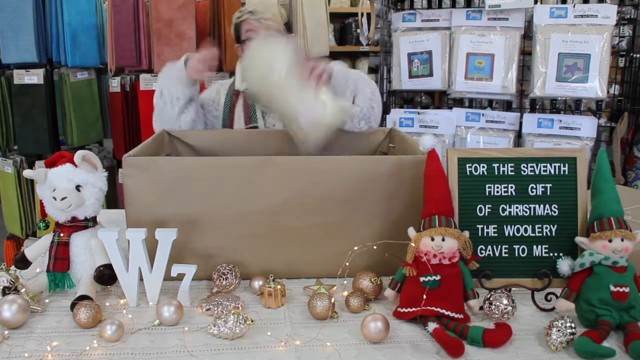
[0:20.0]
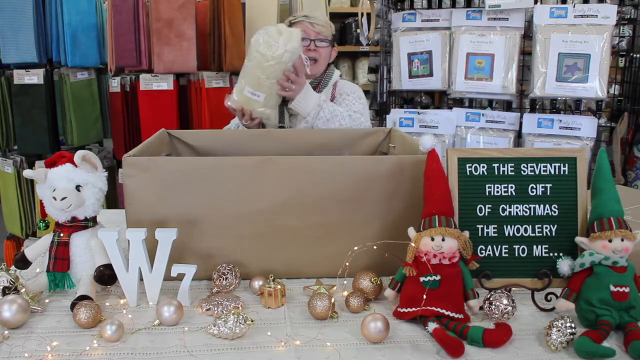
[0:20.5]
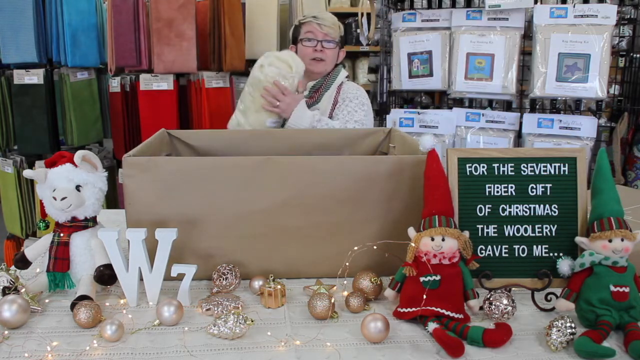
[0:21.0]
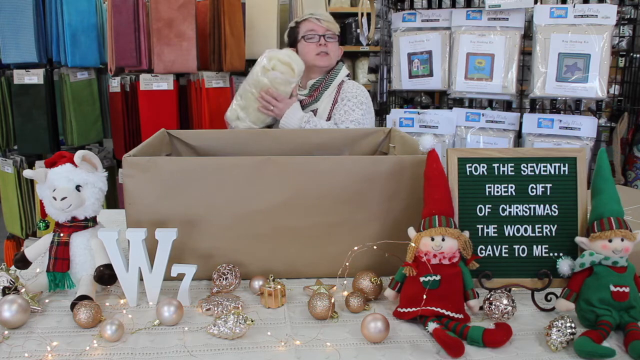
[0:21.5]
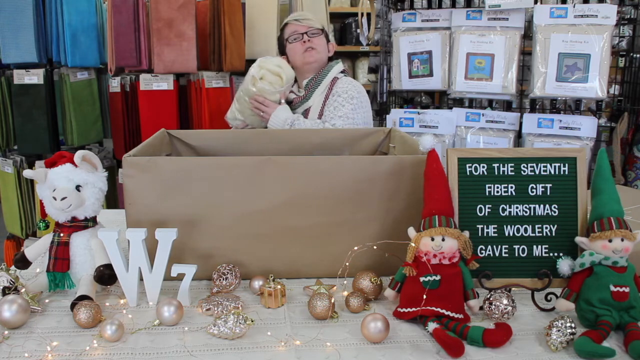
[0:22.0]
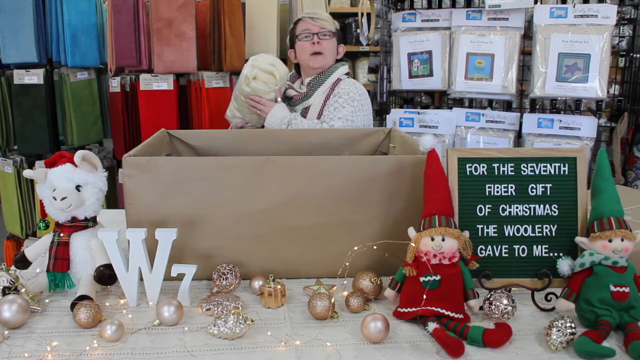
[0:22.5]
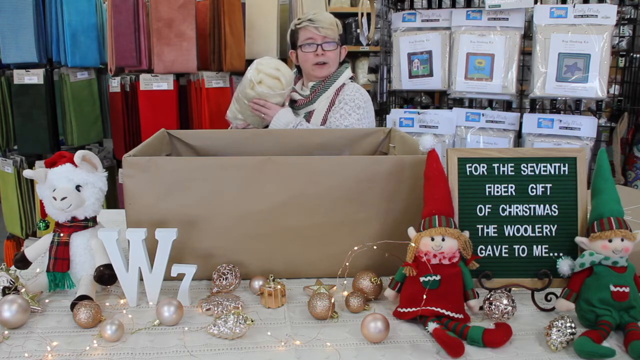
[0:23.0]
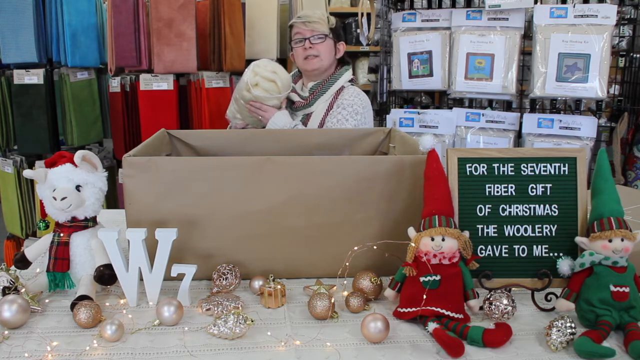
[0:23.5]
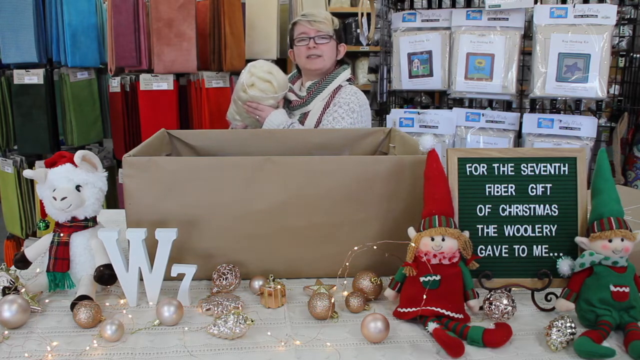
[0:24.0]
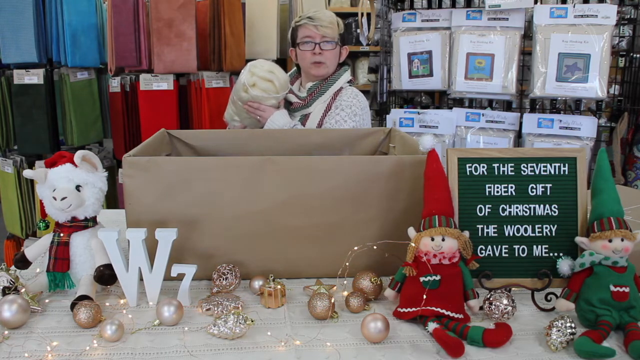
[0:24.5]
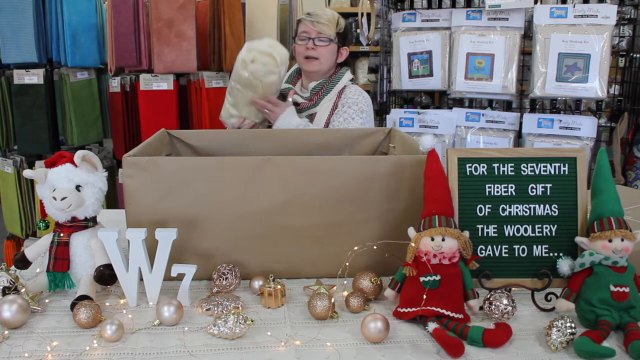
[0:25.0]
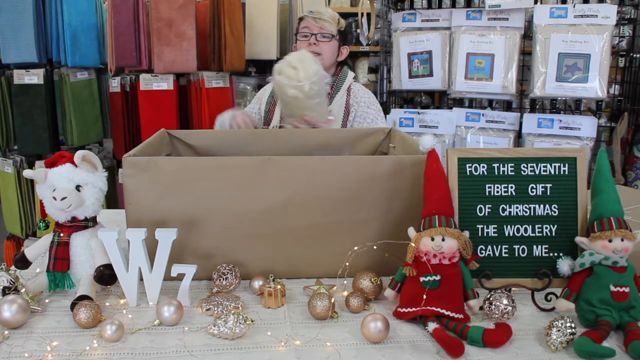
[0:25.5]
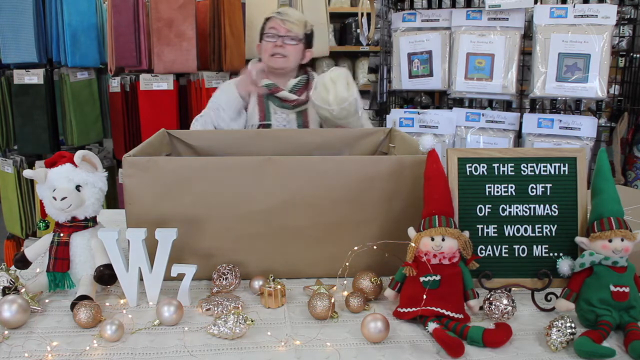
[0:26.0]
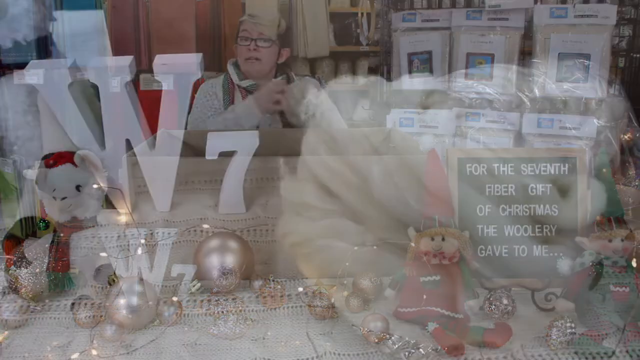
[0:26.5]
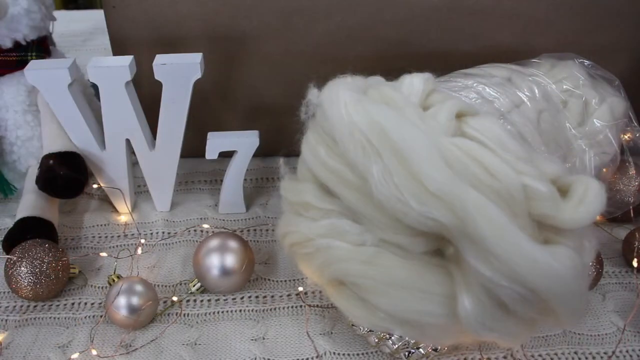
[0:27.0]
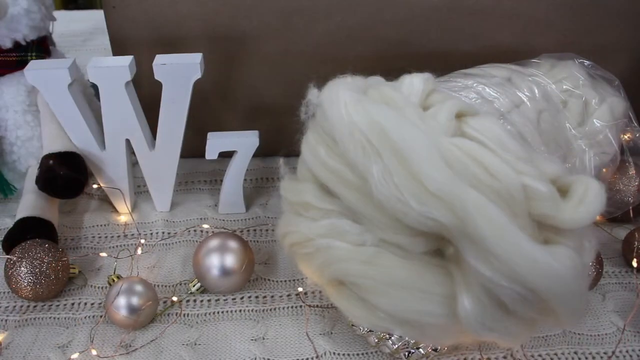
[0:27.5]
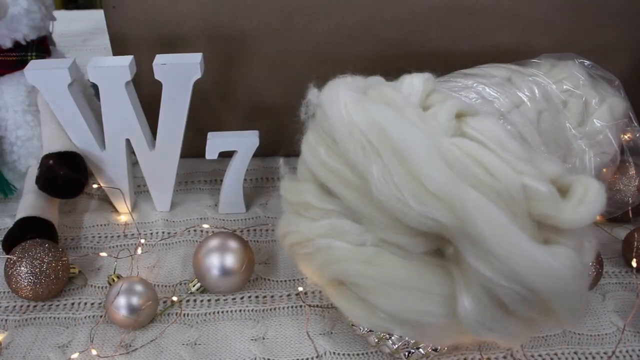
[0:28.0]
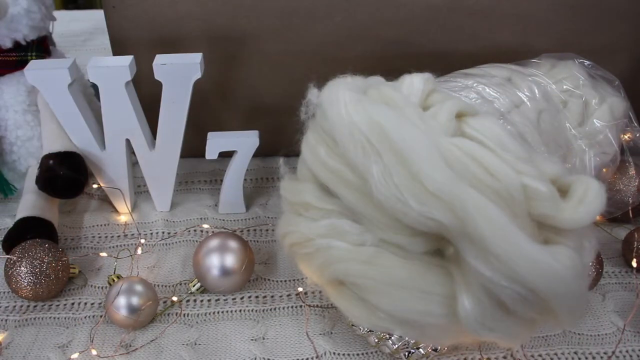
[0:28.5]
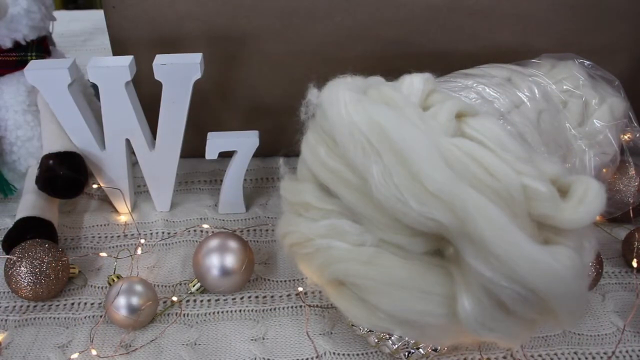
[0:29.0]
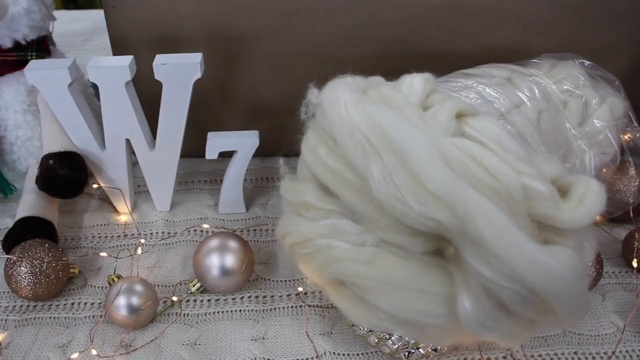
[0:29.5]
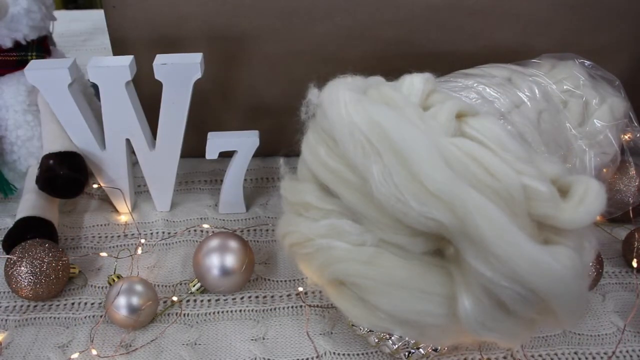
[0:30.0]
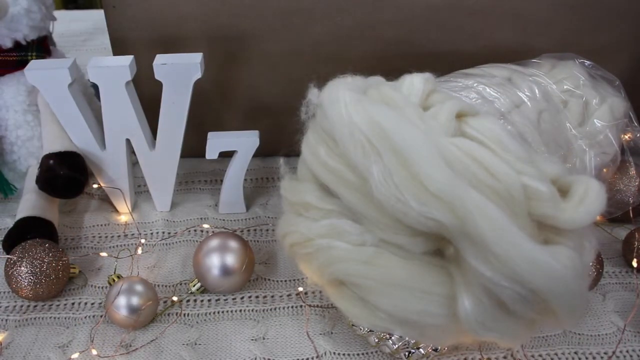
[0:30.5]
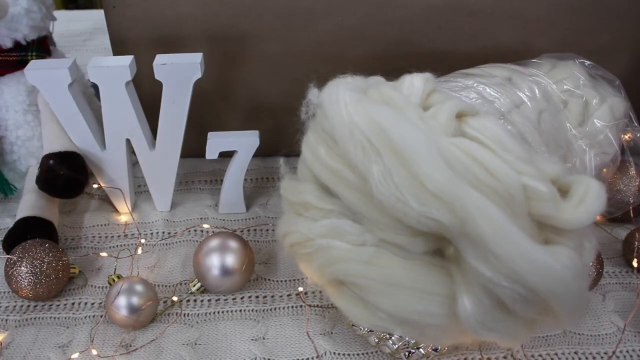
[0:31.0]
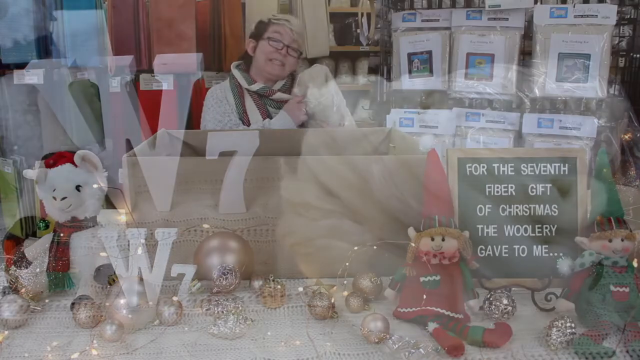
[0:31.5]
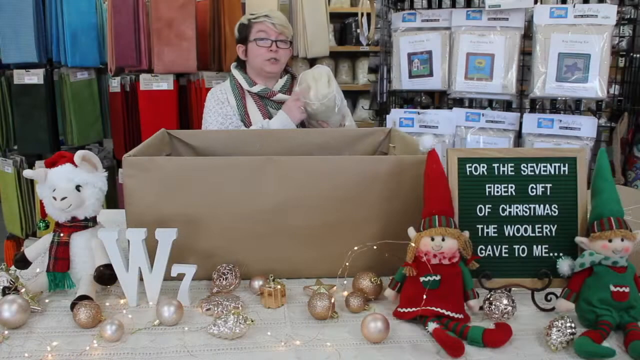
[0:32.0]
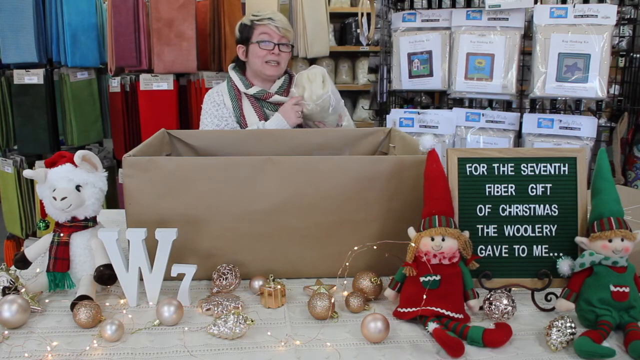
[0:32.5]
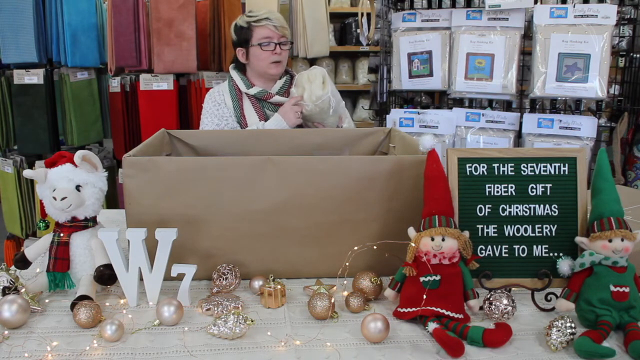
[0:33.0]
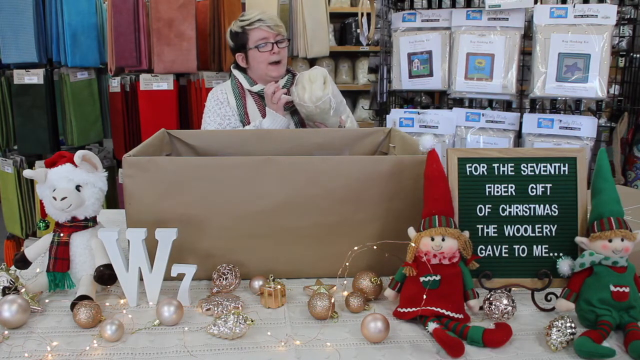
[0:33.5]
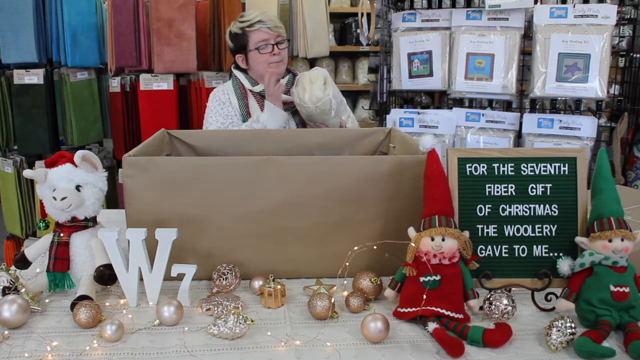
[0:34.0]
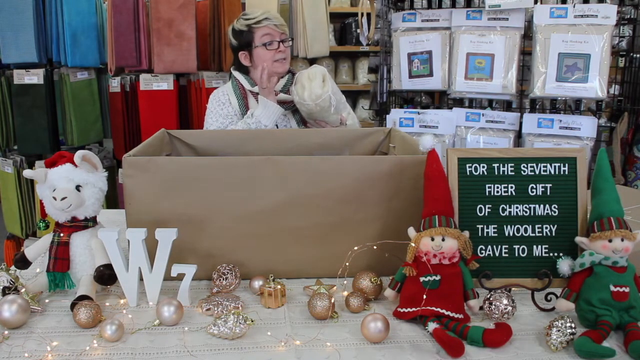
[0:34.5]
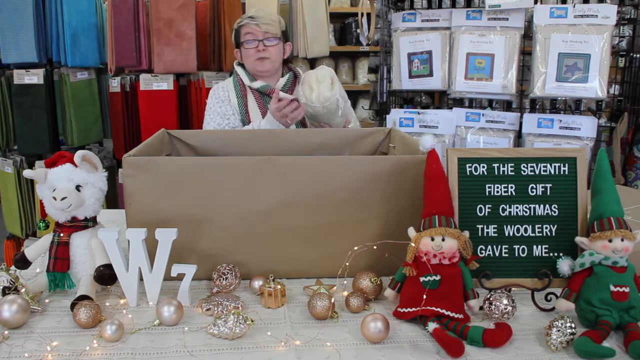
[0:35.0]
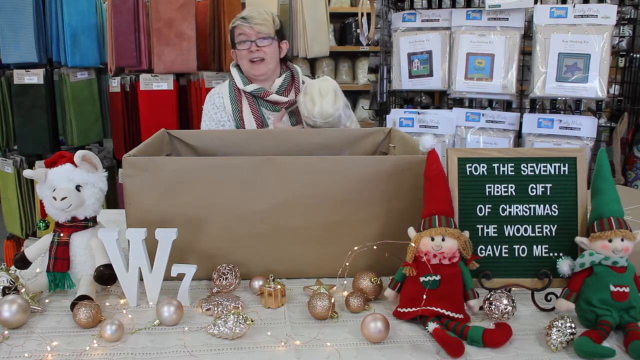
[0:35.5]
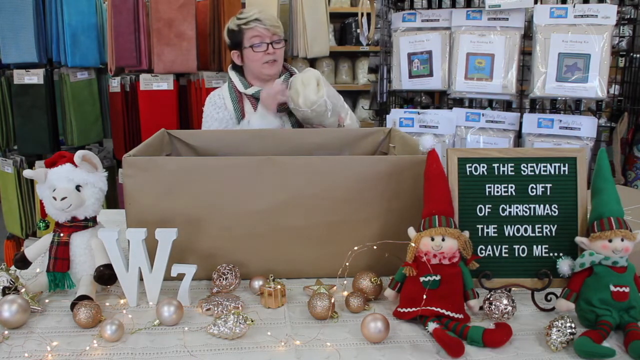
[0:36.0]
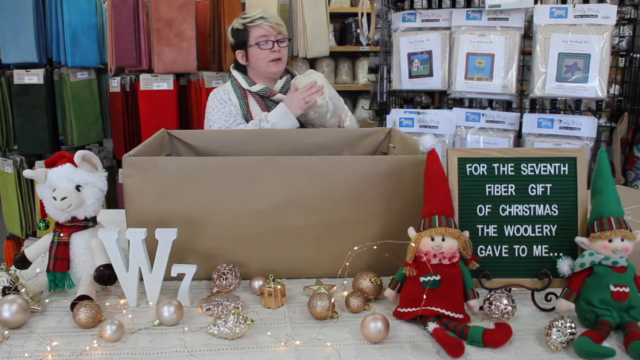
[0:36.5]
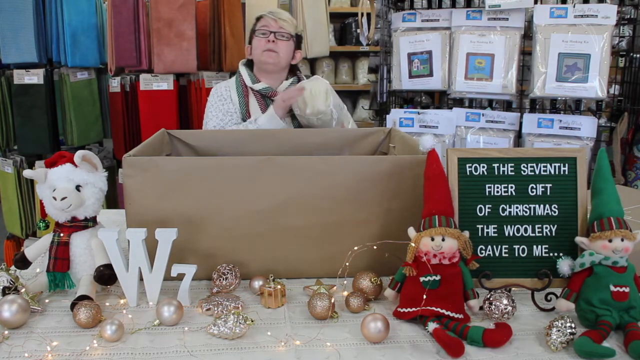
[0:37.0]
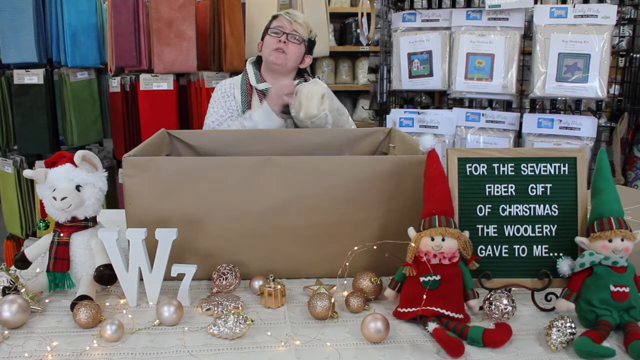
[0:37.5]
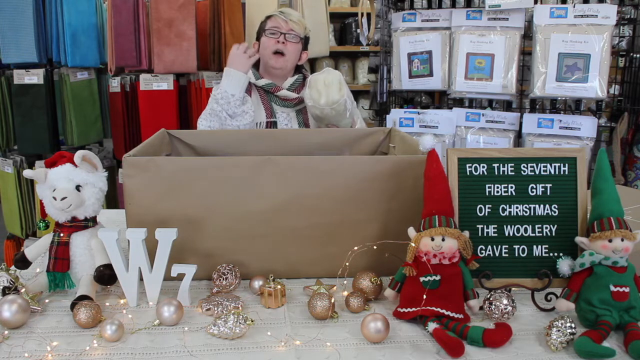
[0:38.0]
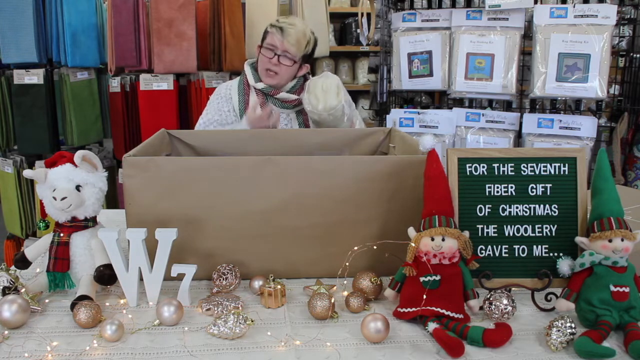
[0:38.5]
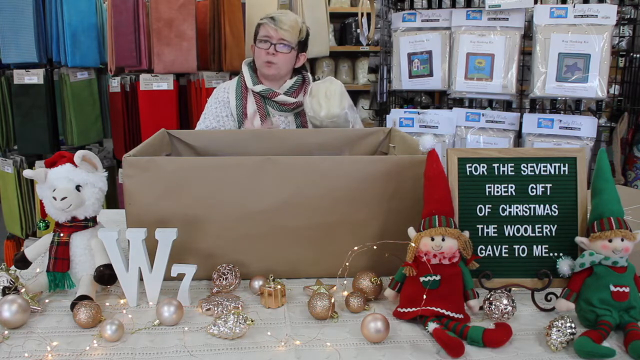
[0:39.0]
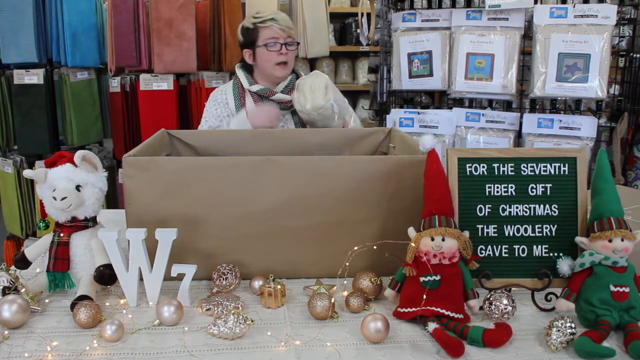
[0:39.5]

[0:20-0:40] A person wearing a white sweater with a green, white and red scarf pulls a small white bag out of a large brown box. The person has short brown hair with blonde highlights in front and wears glasses. On the left side of the box is a white plush animal wearing a red hat and a red scarf. The letters and numbers W7 appear on the table in front of the box, and to the right of the box are two plush elves surrounding a sign with the message "For the seventh fiber gift of Christmas the Woolery gave to me." The person holds the bag of wool they just pulled out of the box. The camera shows a close-up of the wool next to the W7 on the table, then cuts back to the person holding the wool and talking from behind the box.